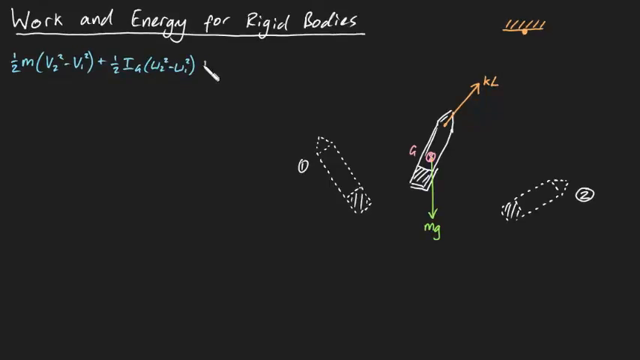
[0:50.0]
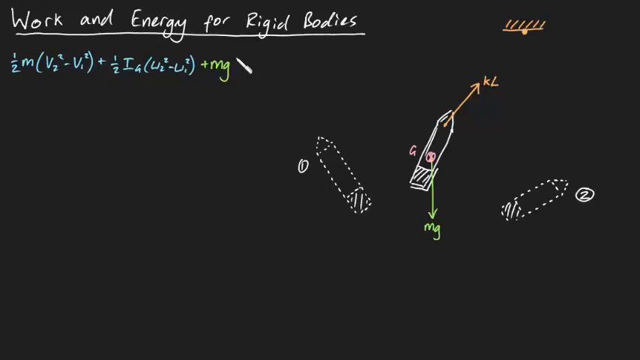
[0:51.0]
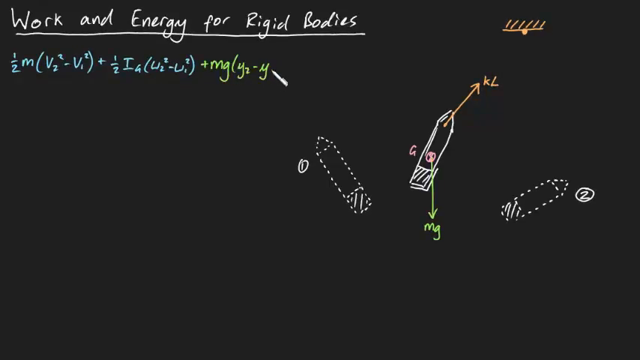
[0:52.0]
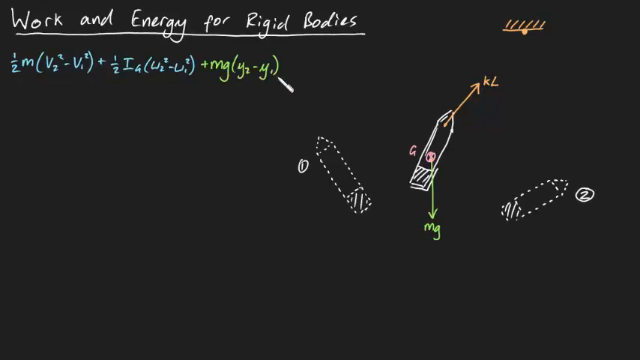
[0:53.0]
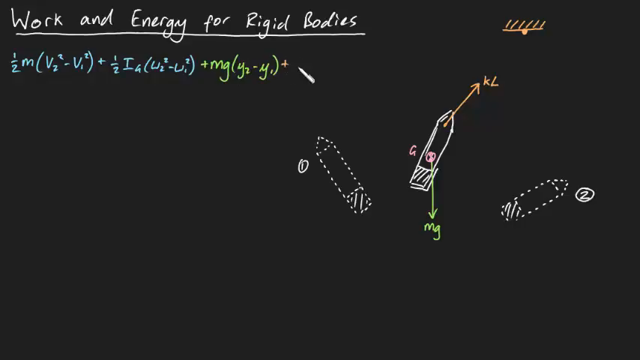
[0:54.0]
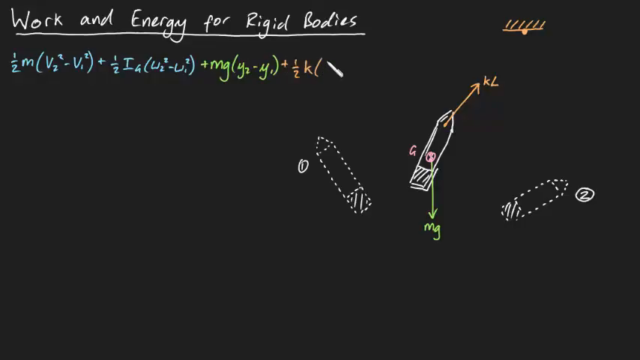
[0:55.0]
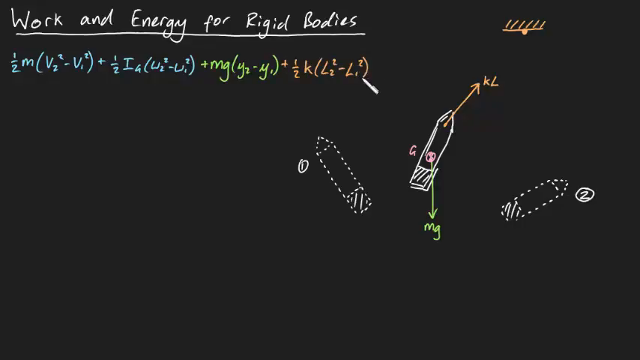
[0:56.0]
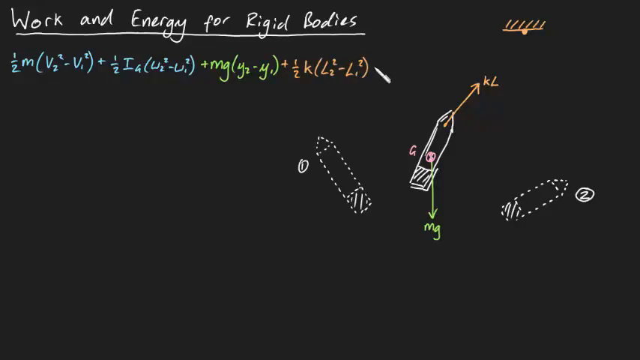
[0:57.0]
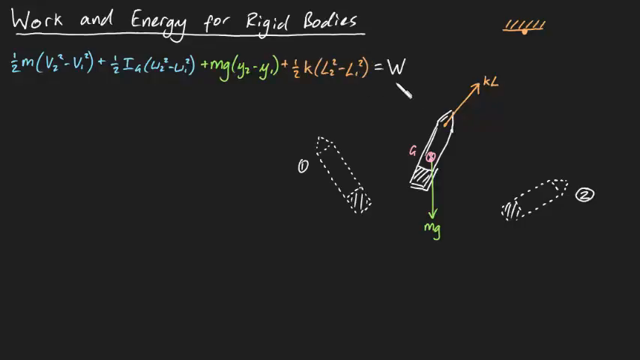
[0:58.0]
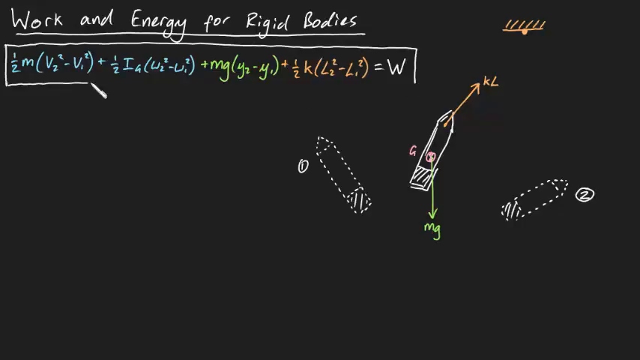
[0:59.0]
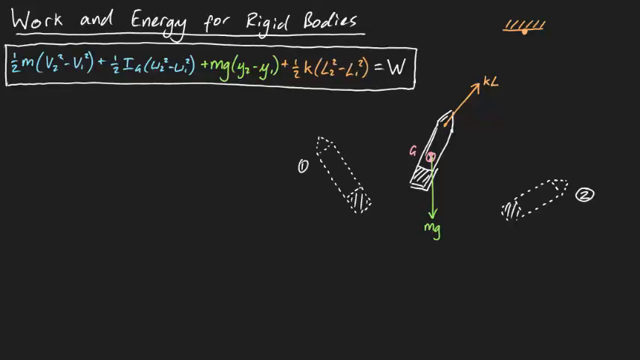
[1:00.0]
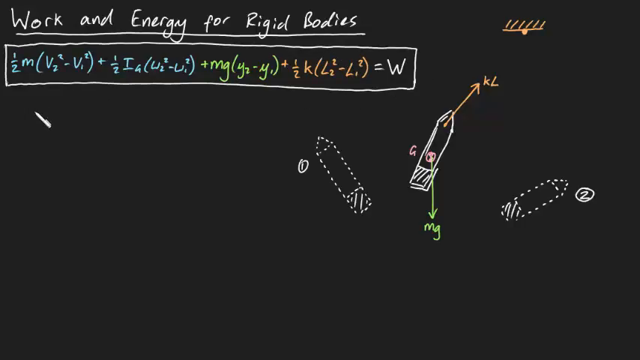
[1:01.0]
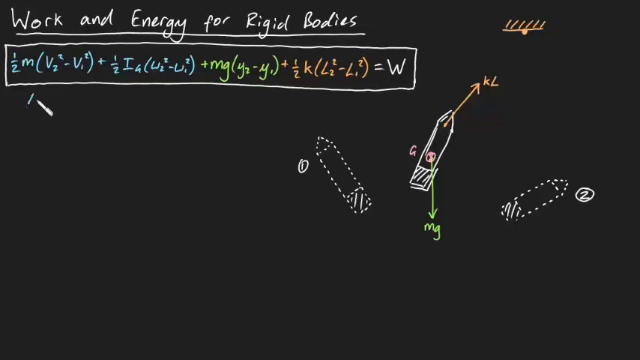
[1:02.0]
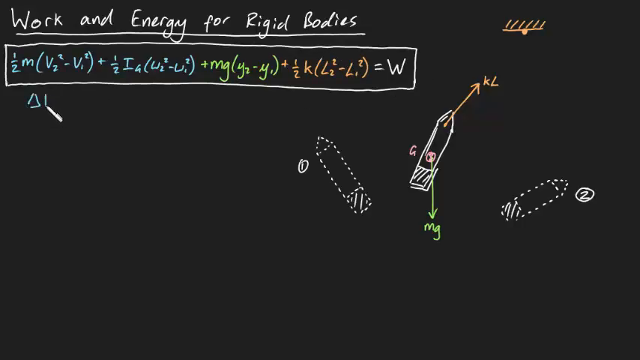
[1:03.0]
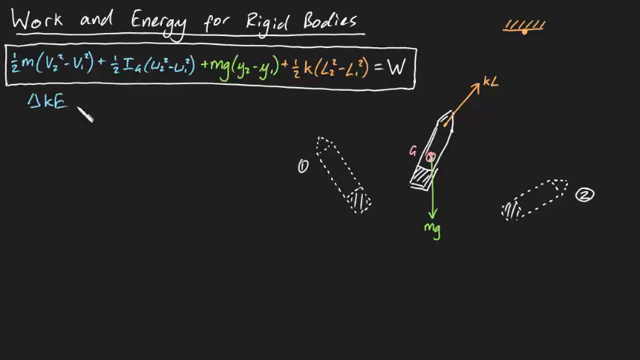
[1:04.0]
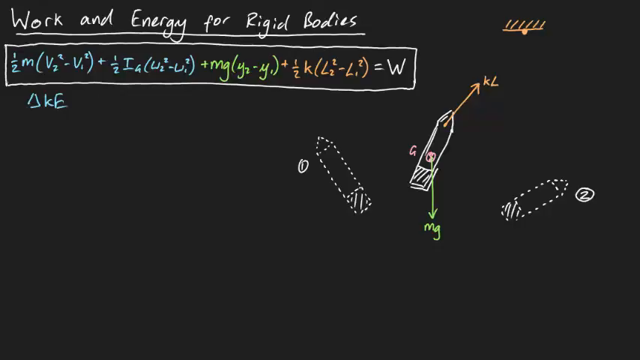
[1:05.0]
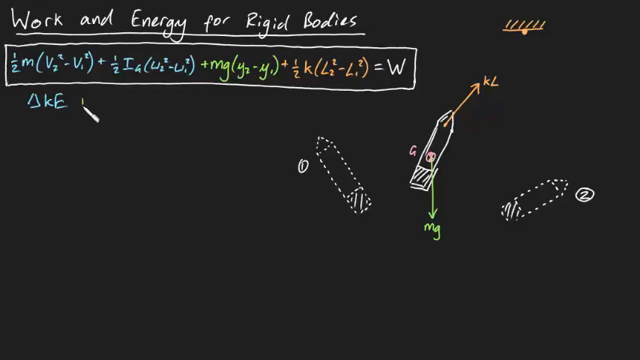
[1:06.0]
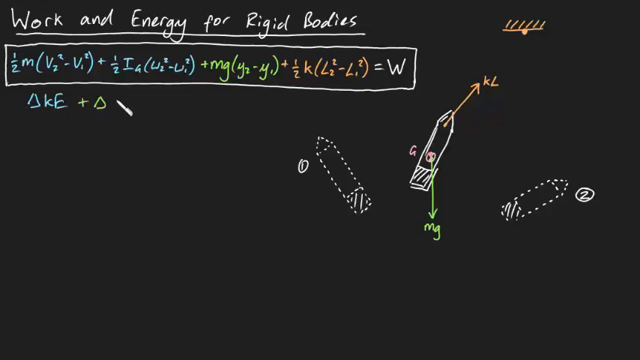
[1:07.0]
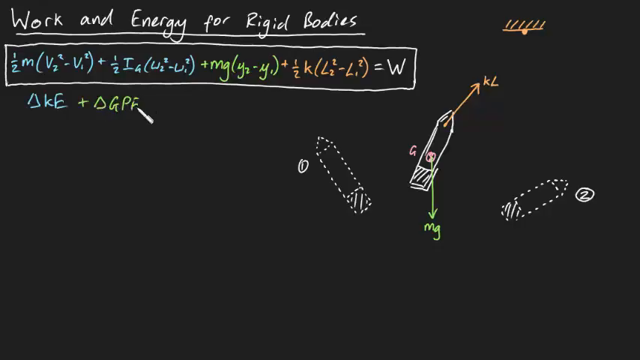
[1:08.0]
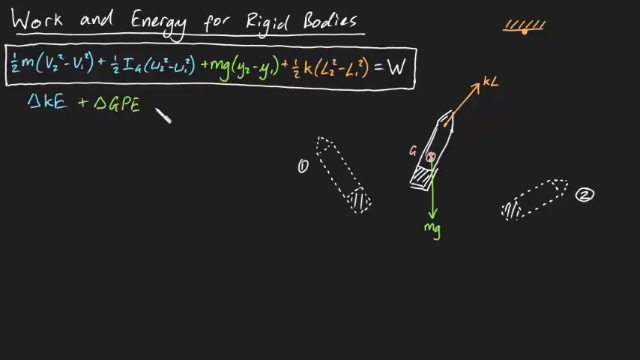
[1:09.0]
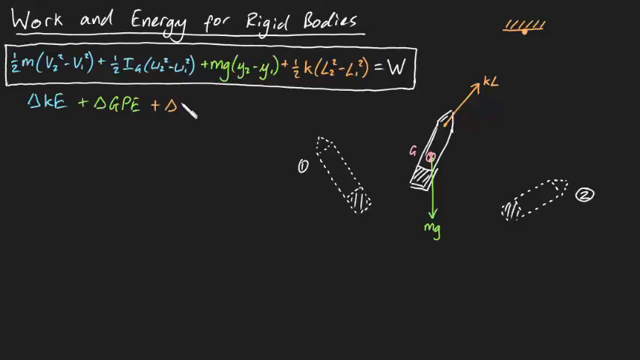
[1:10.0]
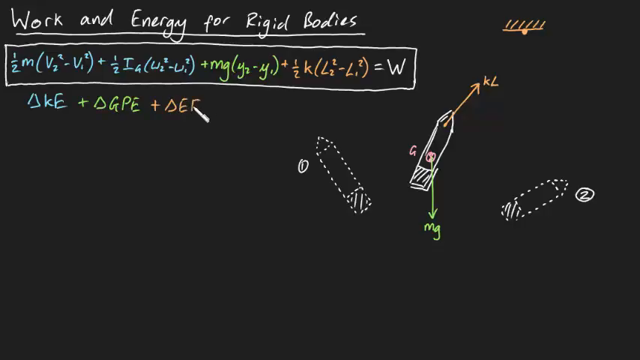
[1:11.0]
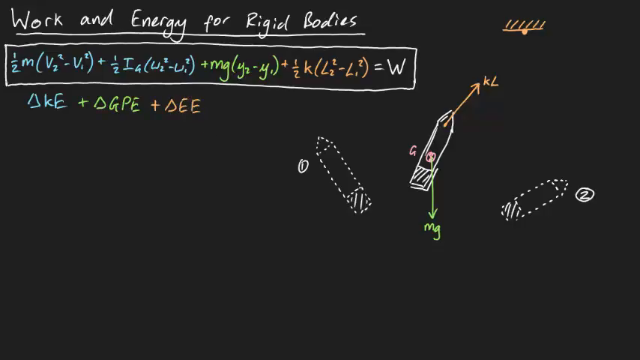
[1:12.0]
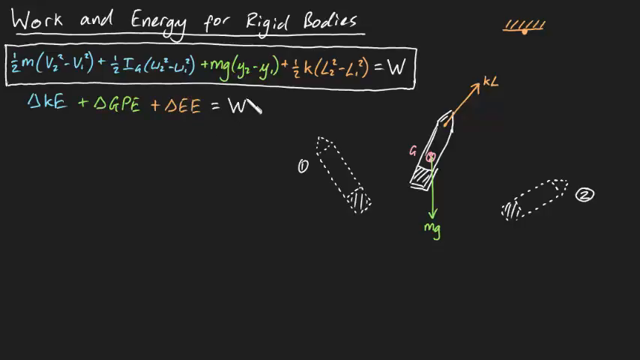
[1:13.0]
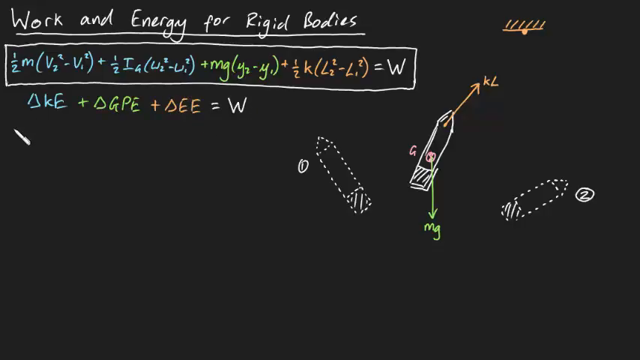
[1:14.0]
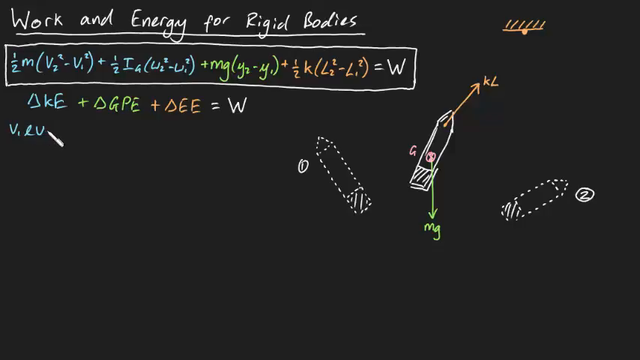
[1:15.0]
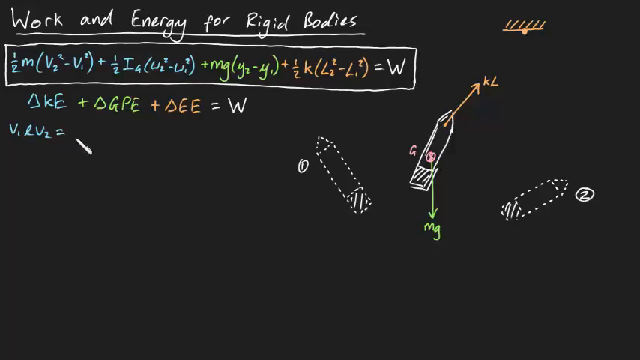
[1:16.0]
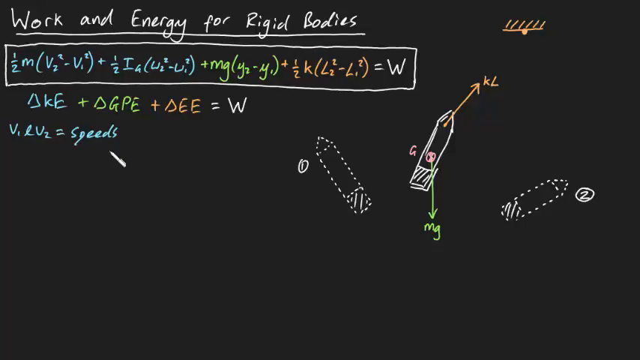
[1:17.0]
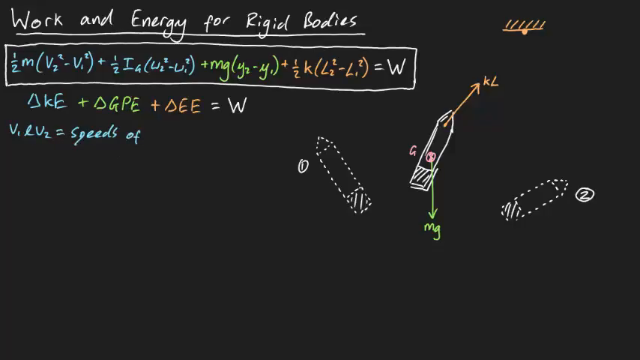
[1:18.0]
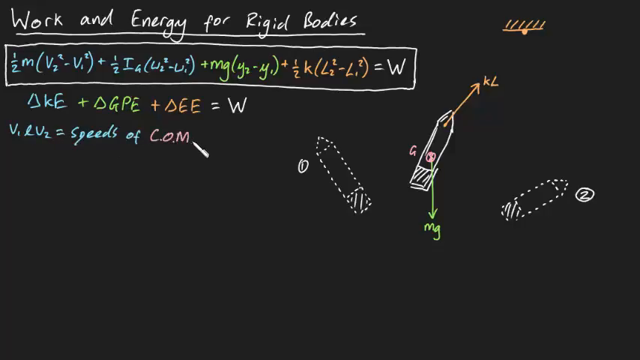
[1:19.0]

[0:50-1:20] The white cursor writes mathematical formulas made of numbers and letters, first in green and then in orange. After writing an equal sign and the letter W at the end of the formula, it draws a white rectangle around the whole formula, which is colored blue, green, orange and white. Below this formula, the cursor quickly writes letters separated from each other by plus signs, and again in white writes an equal sign and the letter W on the right side of the formula. It then moves down and continues writing letters and numbers separated by an equal sign below the second formula. The cursor moves very quickly, but its movement is fluid and easy to follow.